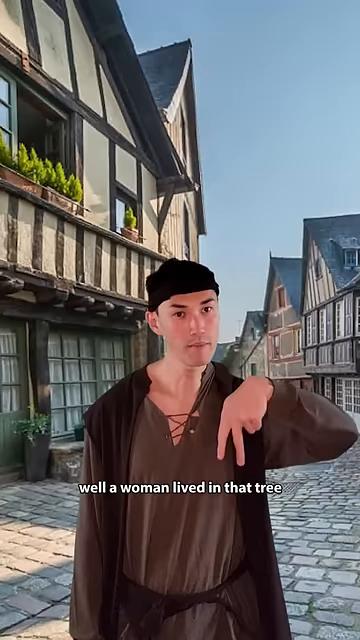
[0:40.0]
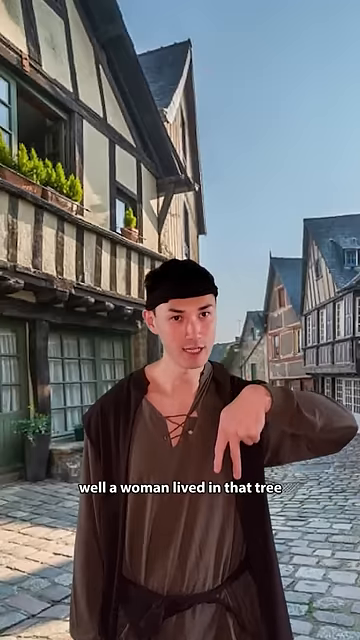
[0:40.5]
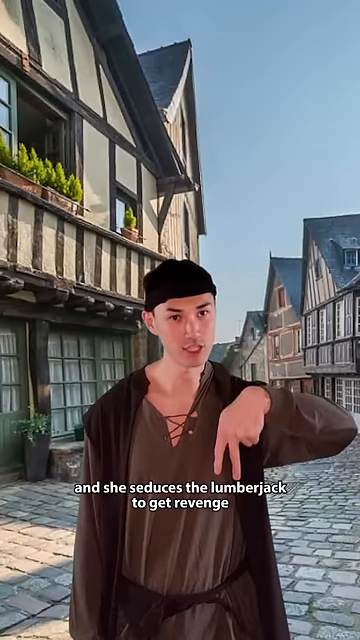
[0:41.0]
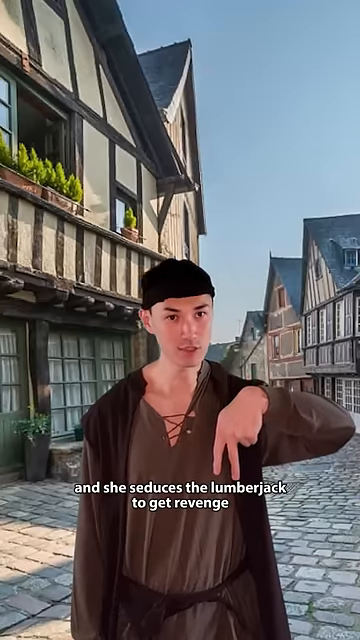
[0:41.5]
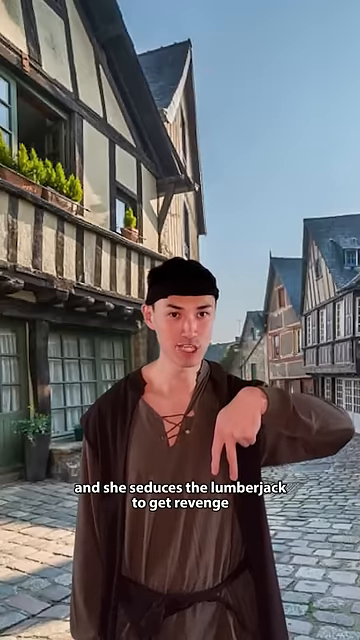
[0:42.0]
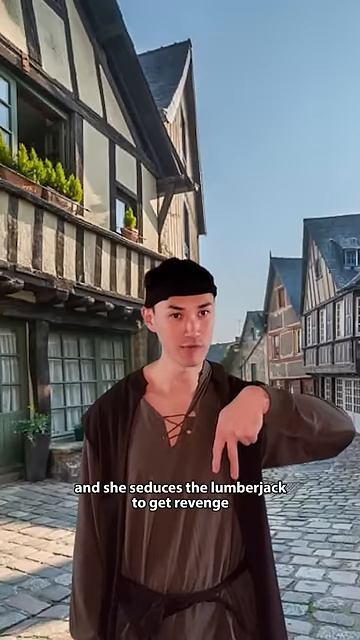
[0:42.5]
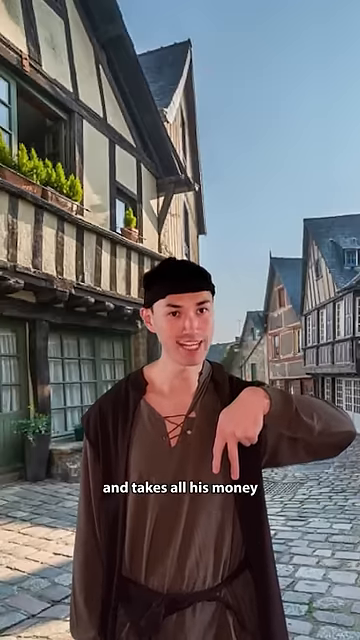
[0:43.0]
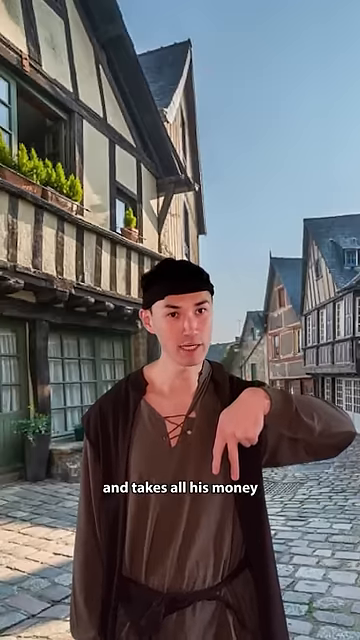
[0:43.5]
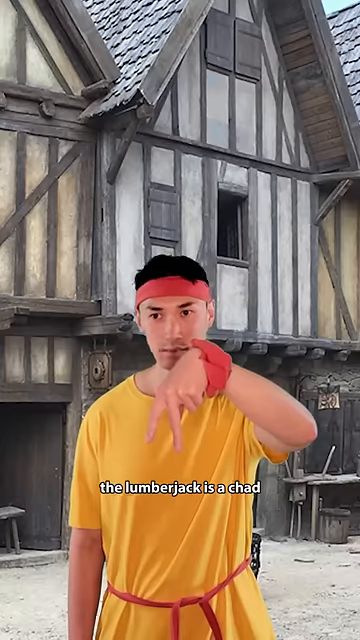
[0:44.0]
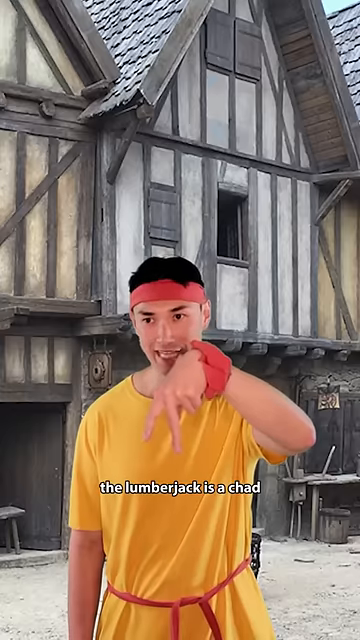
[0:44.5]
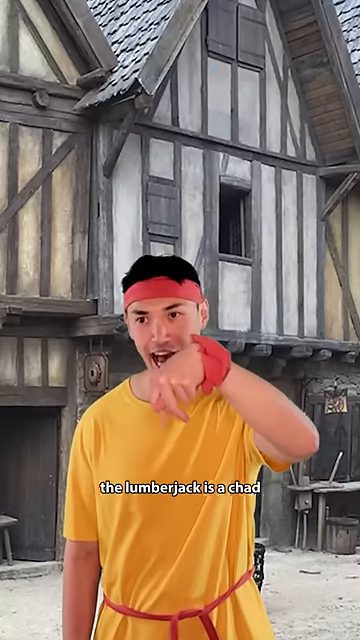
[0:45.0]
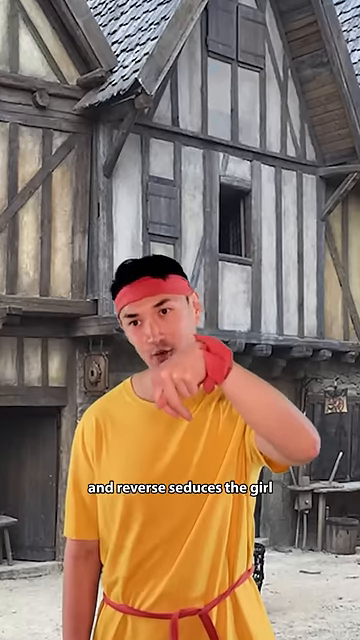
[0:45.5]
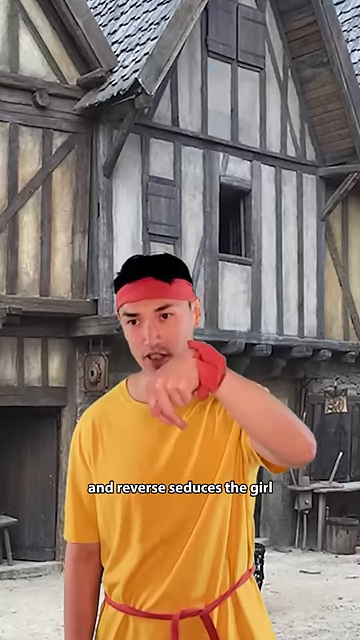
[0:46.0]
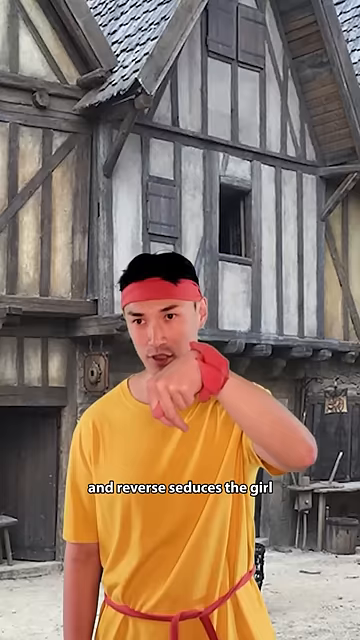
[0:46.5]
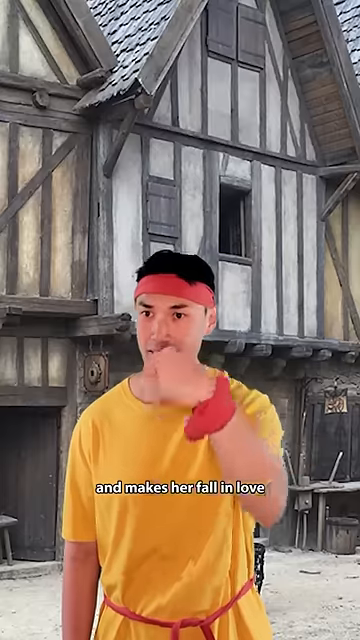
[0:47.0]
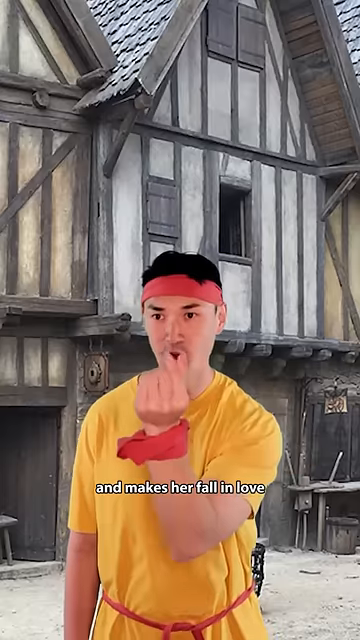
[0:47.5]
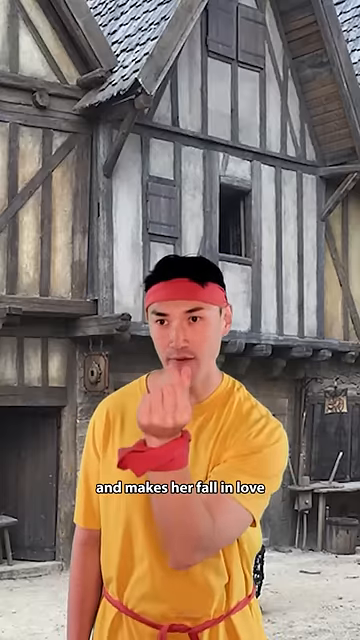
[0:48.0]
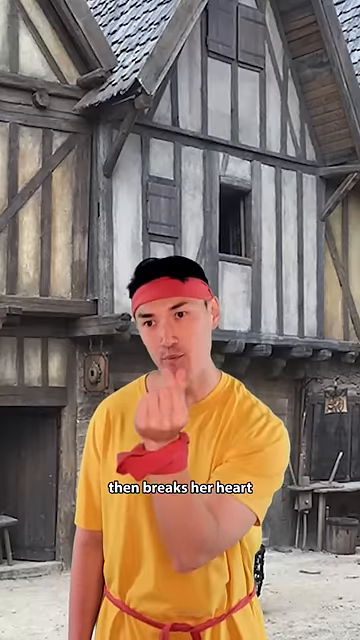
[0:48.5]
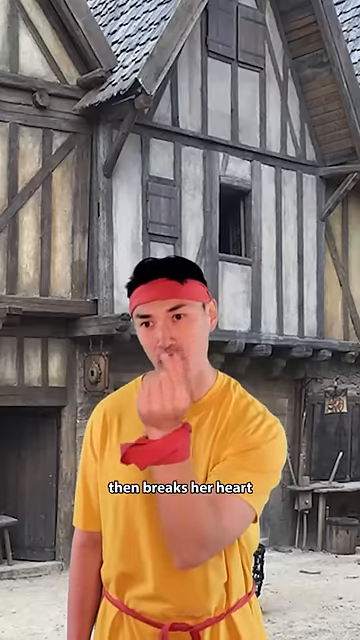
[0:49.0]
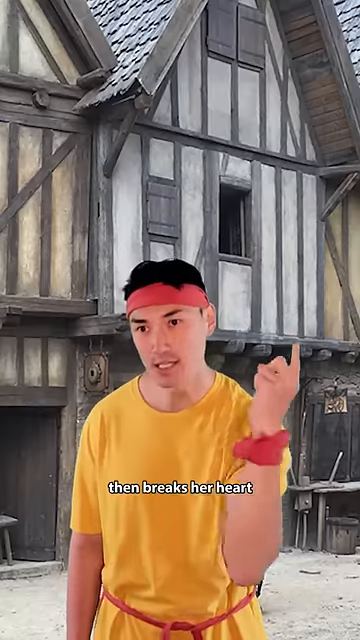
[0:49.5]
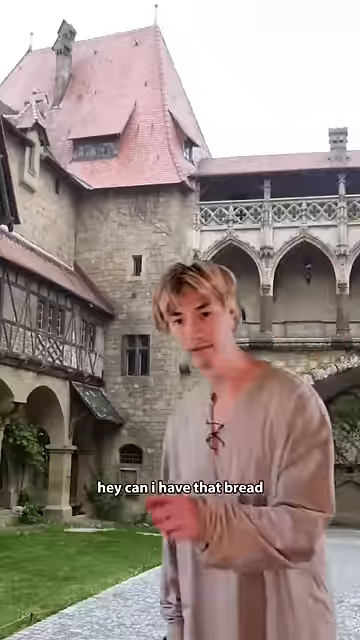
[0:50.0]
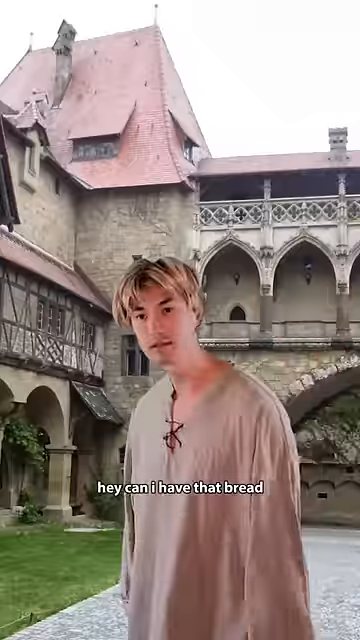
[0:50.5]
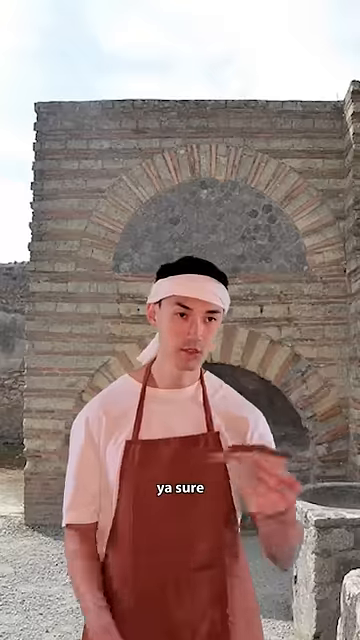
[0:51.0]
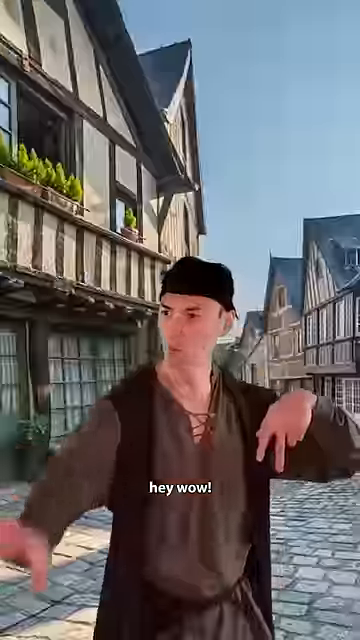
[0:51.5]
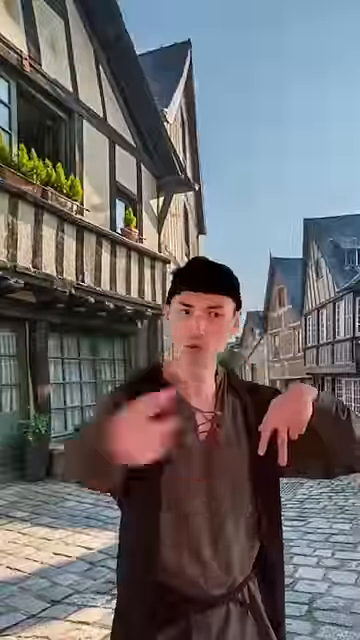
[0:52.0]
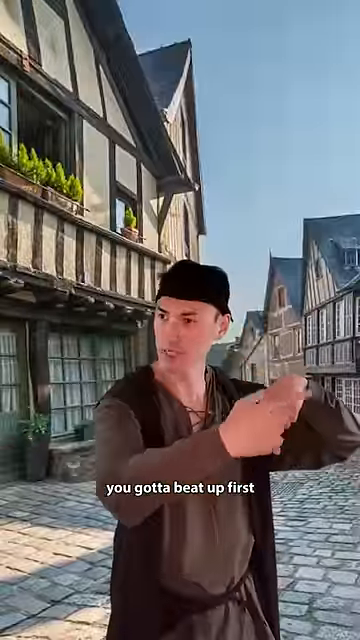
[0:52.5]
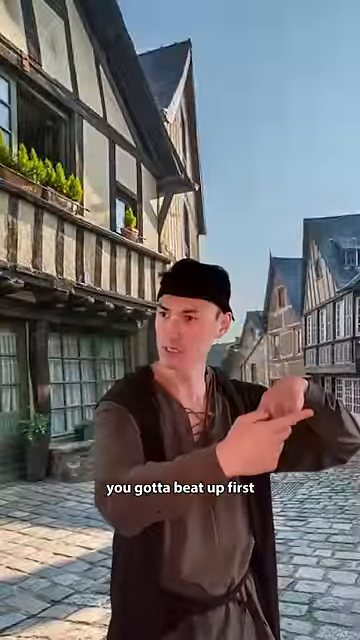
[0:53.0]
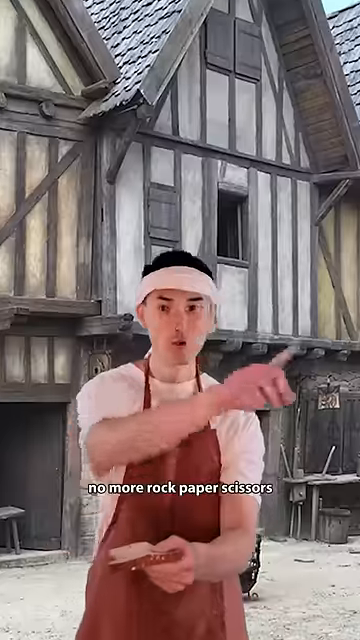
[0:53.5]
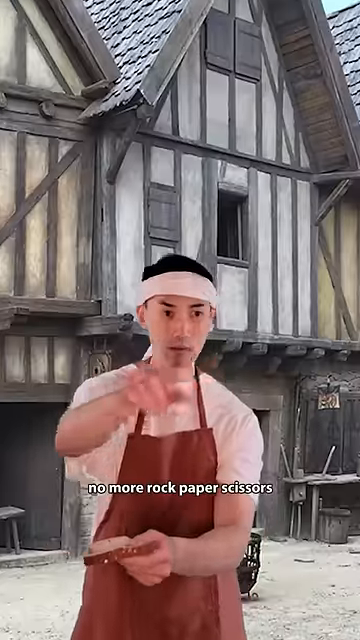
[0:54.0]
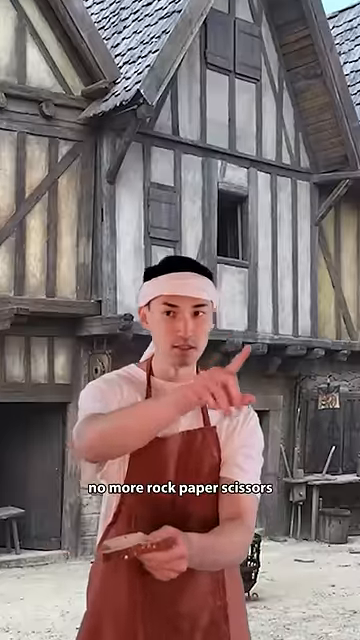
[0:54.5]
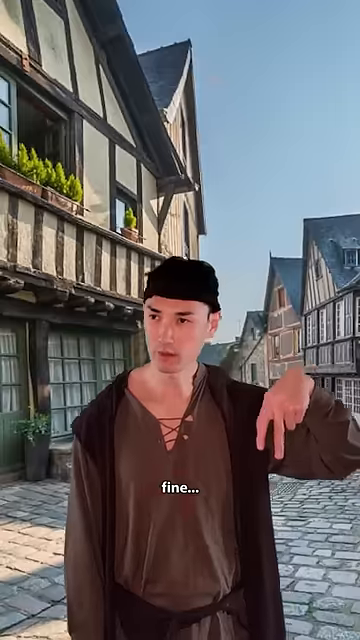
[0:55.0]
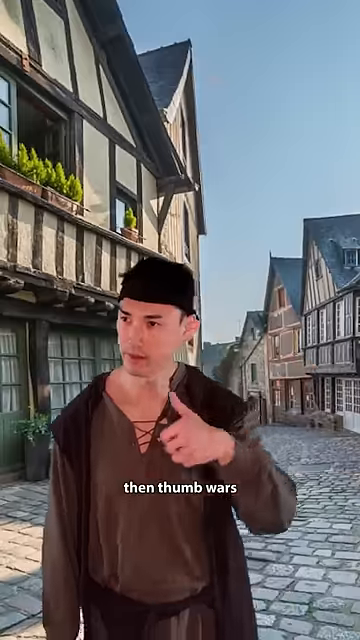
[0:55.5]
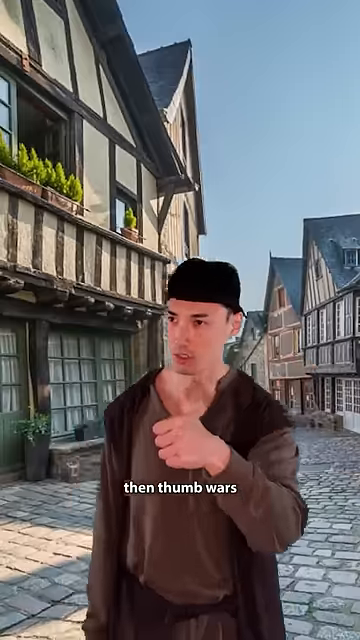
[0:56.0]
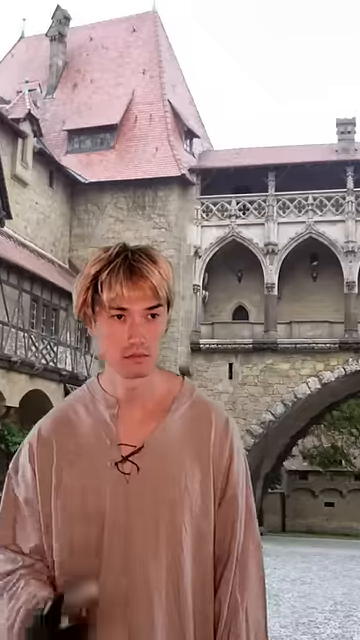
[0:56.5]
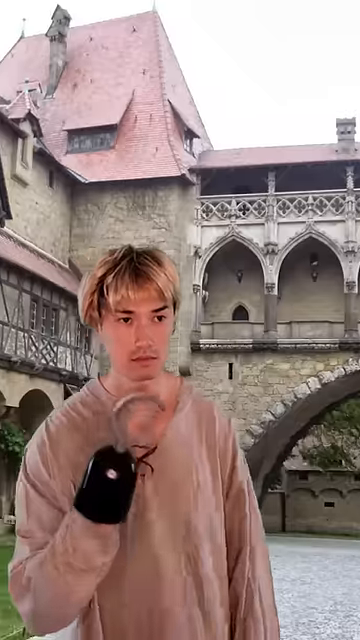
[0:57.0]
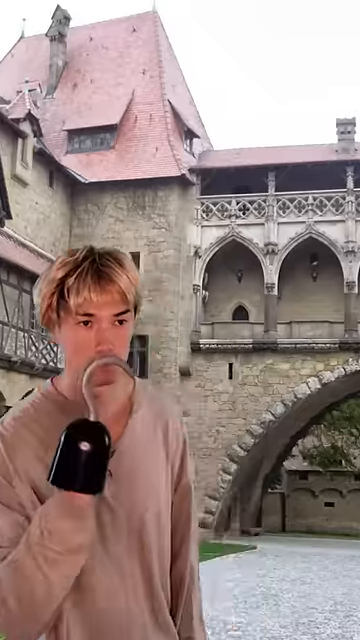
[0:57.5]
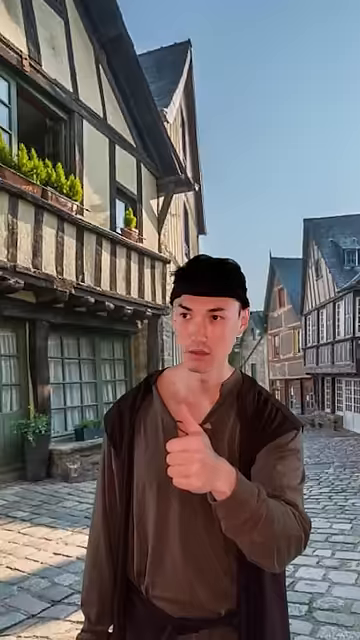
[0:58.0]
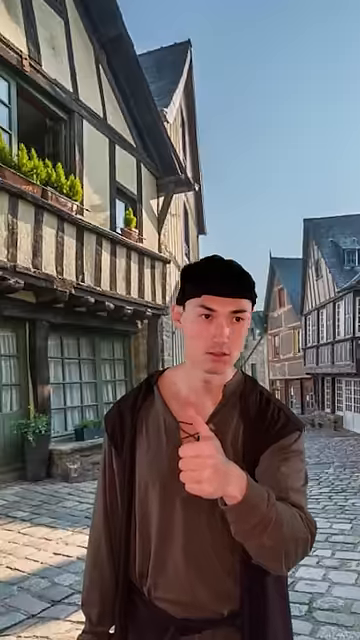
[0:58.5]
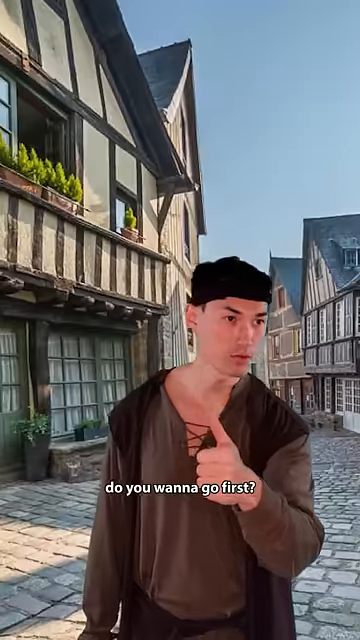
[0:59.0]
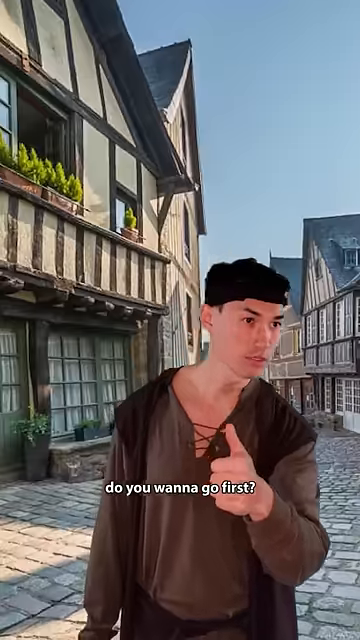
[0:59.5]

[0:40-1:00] The two keep playing, each trying to beat the other. The brown-clad guy continues with "she seduces the lumberjack to get revenge," and the reply is that the lumberjack "reverse seduces the girl and makes her fall in love then breaks her heart." Then another guy in another brown shirt comes up and says, "Hey, can I have that bread?" The baker says, "Yeah, sure." The baker then says, "No more rock-paper-scissors," and a thumb war is proposed instead; the guy has a hook on his hand and is asked, "Do you want to go first?", apparently the joke being that no one can win a thumb war against a guy with a hook. The background is medieval, and the one performer changes outfits between each role. Everything said is captioned at the bottom.